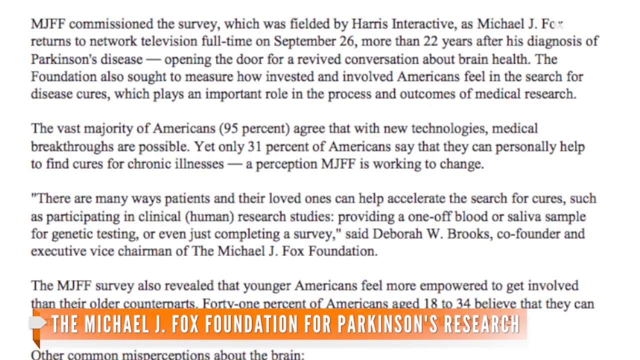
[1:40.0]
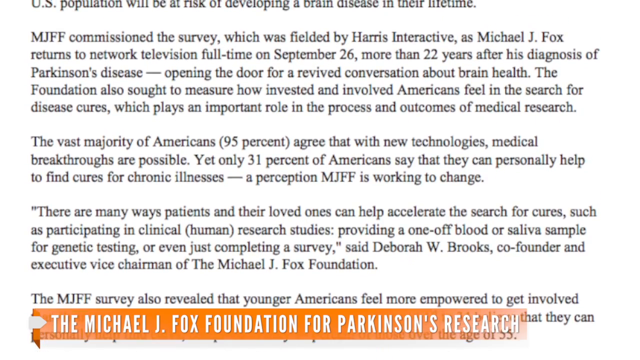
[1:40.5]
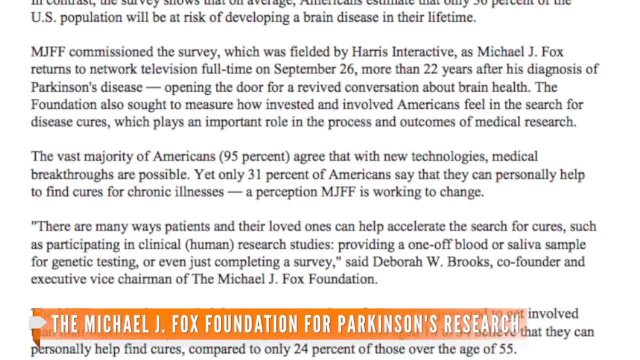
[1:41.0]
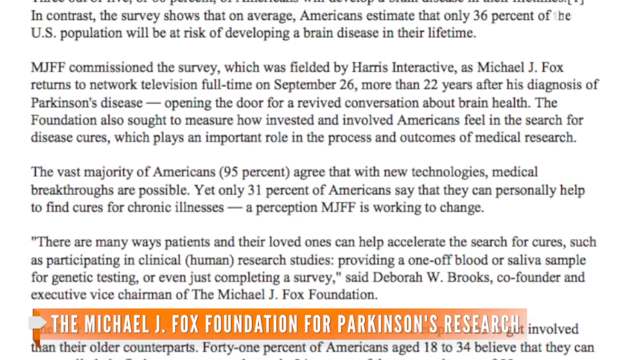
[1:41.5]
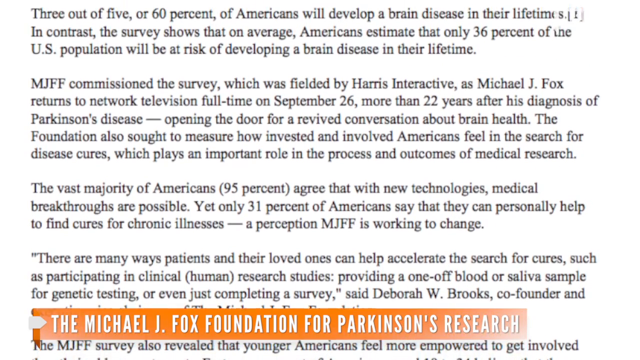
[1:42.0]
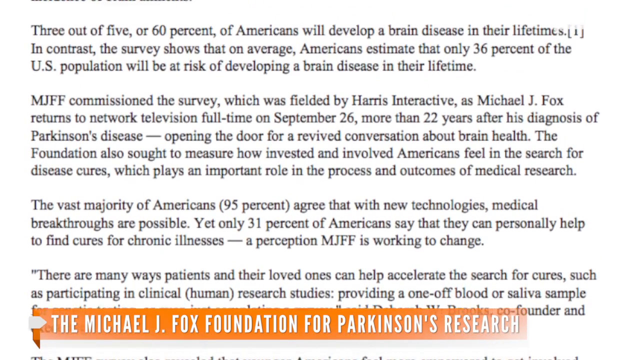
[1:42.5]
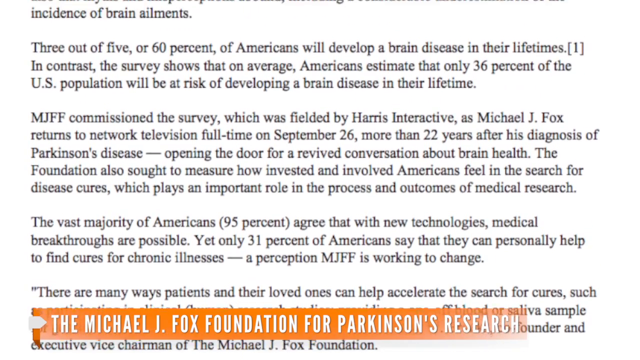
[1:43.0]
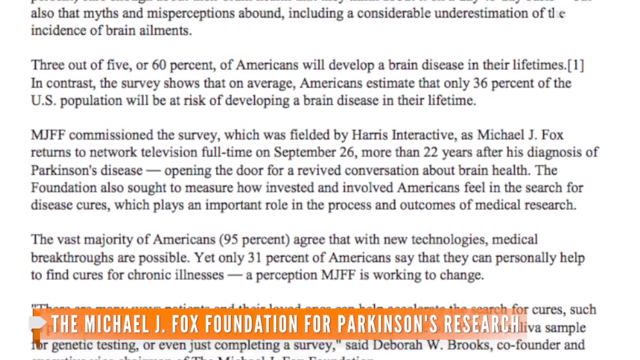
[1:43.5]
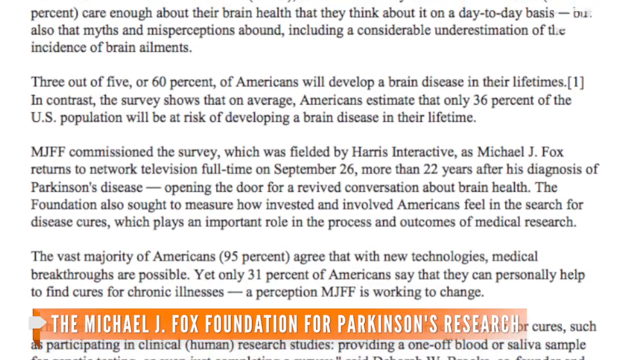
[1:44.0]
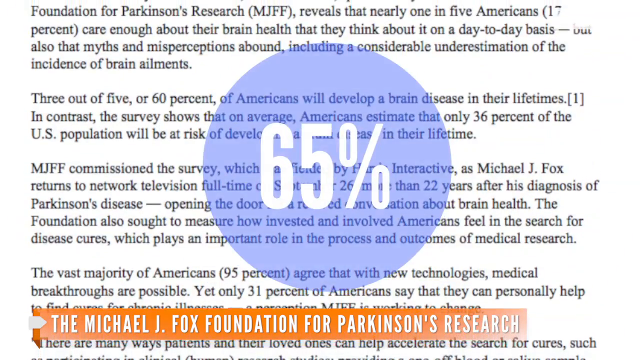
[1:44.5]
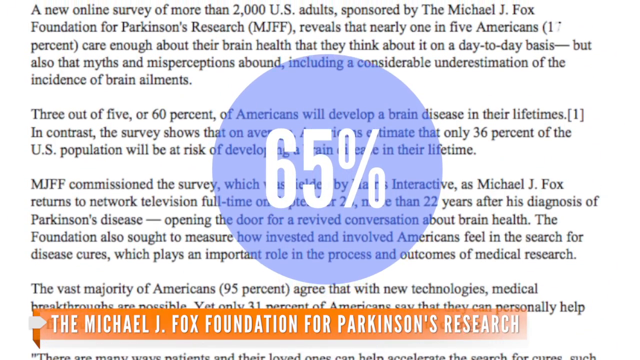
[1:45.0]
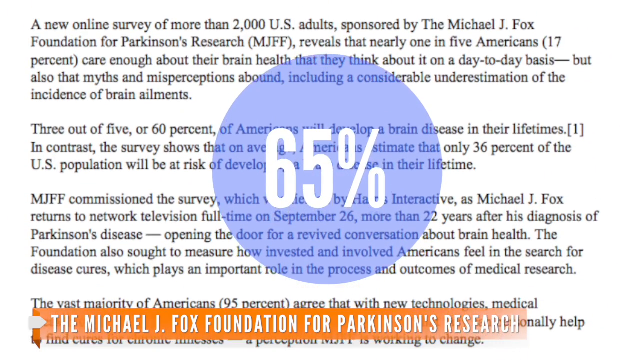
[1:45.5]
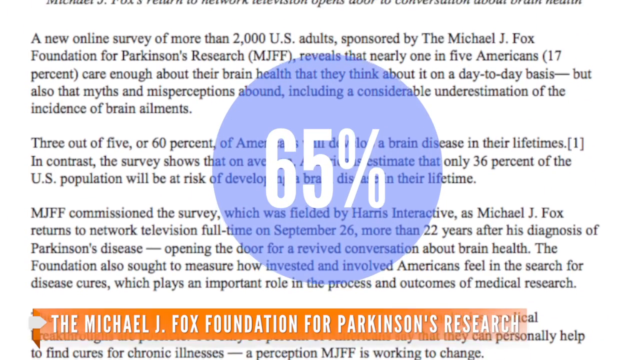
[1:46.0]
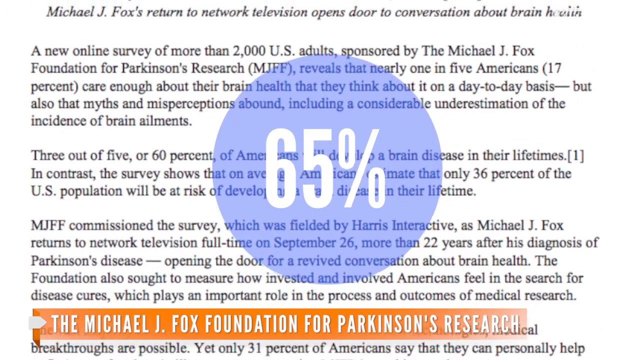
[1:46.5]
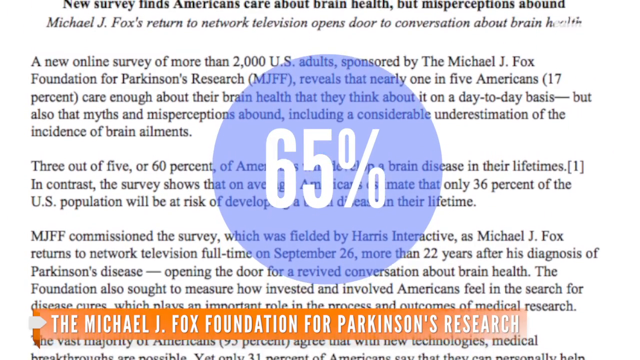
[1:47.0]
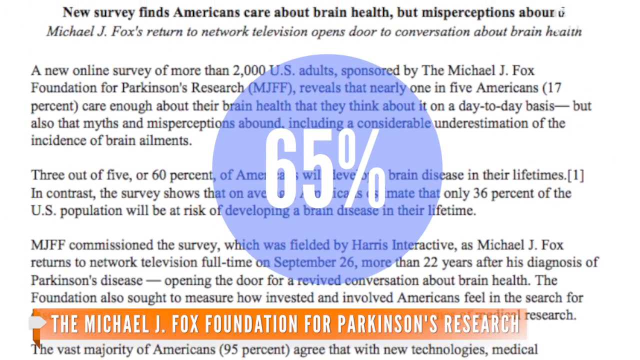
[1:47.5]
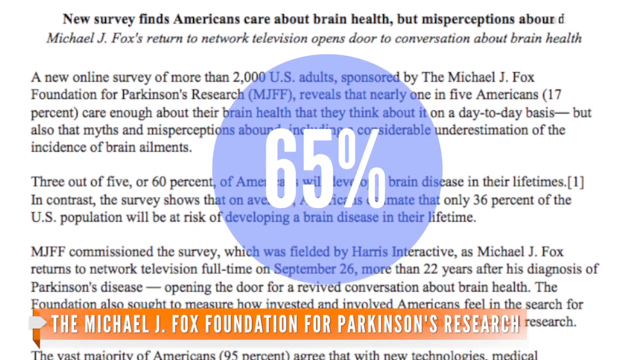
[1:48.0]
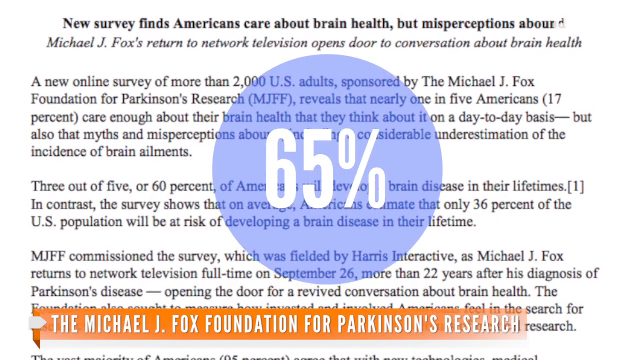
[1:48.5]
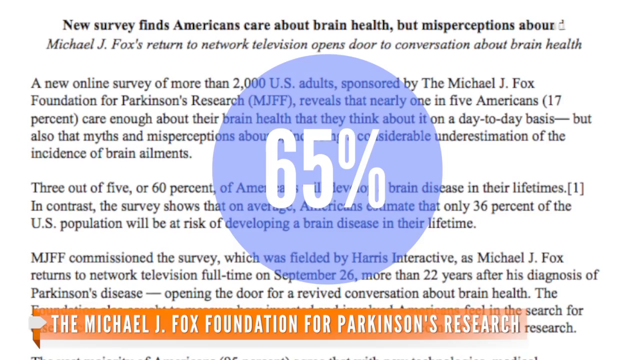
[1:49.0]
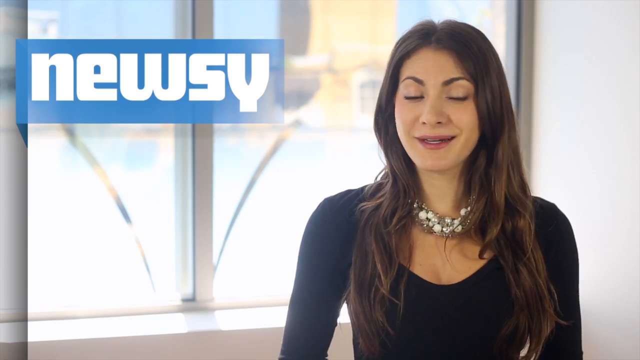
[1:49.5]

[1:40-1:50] A white background shows information from an article in black text reading "Muff Commission Survey, which was fielded by Harris Interactive as Michael J. Fox returns to network television full-time on September 26th, more than 22 years after his diagnosis of Parkinson's disease, opening the door for a revived conversation about brain health."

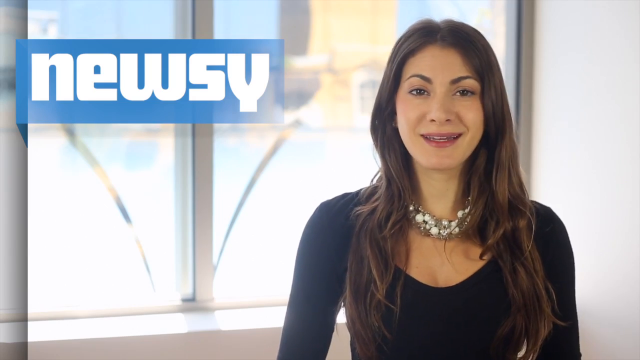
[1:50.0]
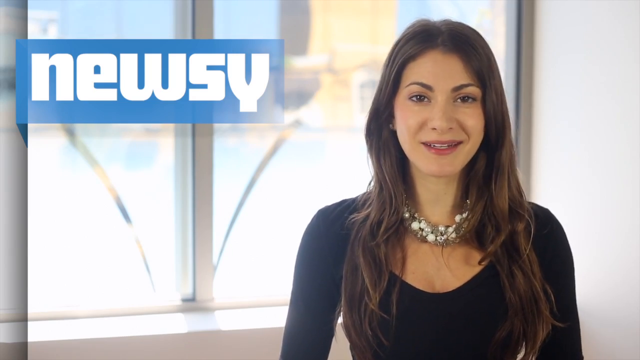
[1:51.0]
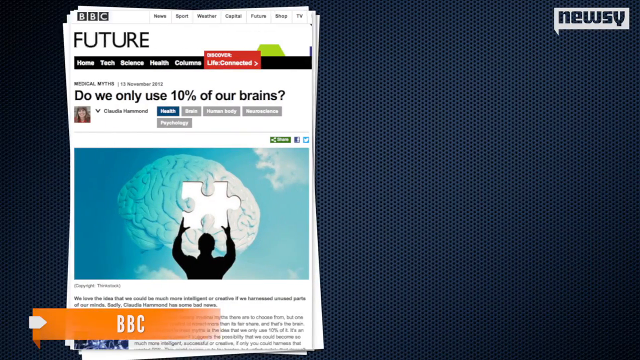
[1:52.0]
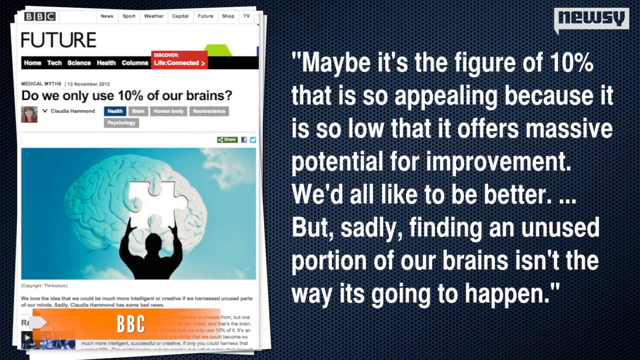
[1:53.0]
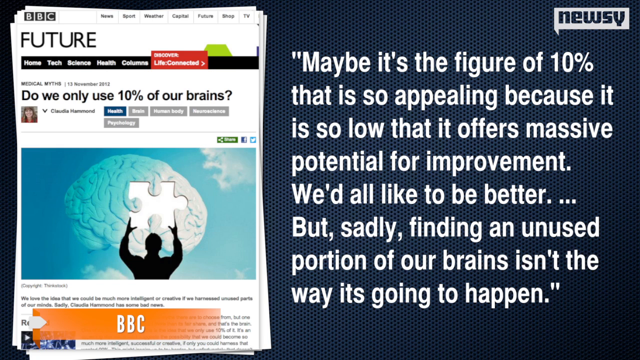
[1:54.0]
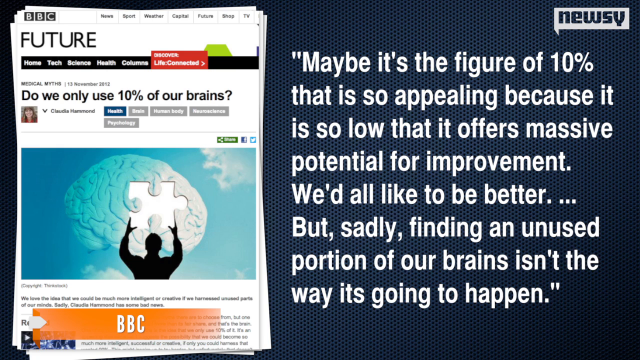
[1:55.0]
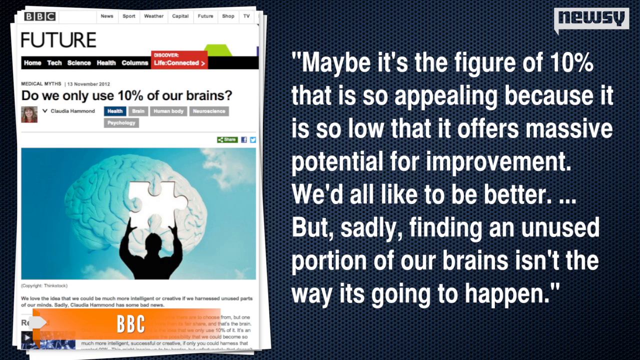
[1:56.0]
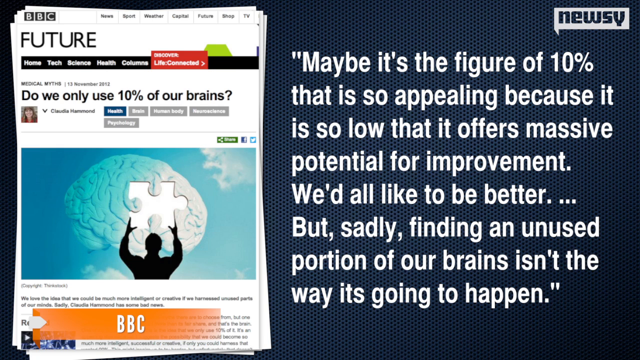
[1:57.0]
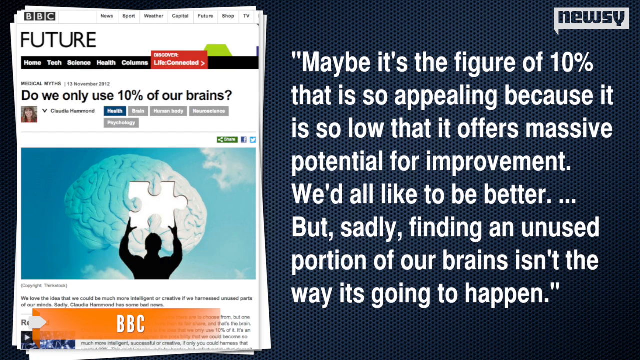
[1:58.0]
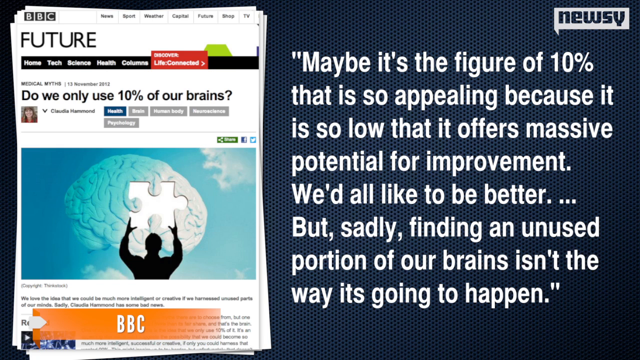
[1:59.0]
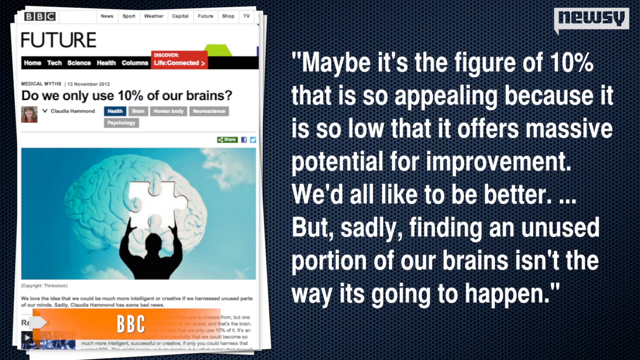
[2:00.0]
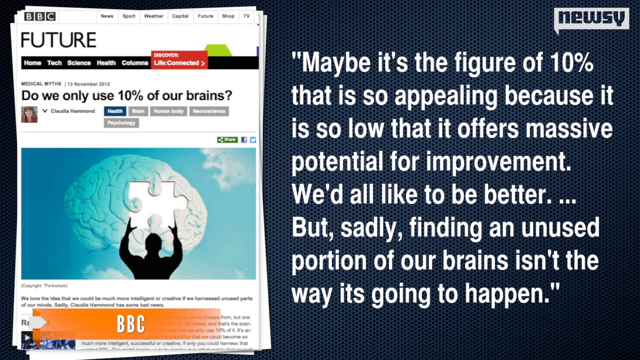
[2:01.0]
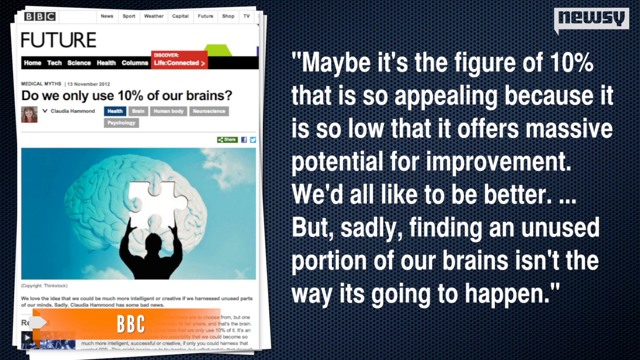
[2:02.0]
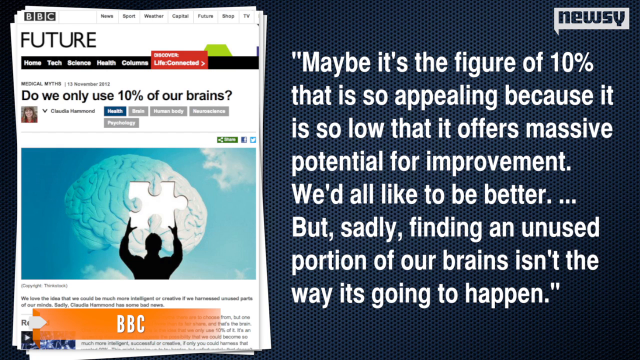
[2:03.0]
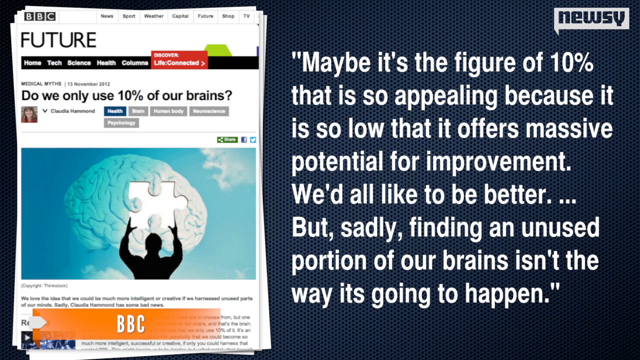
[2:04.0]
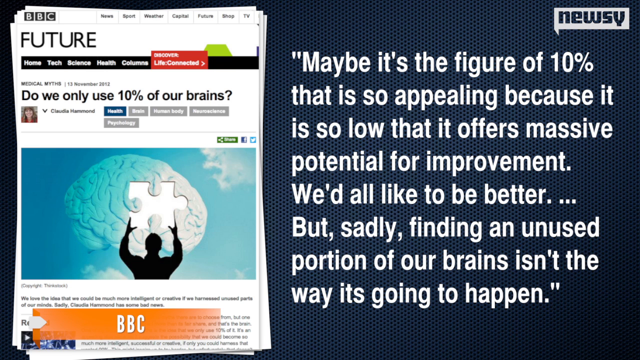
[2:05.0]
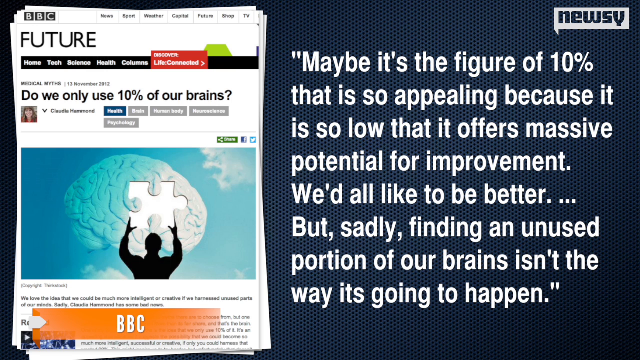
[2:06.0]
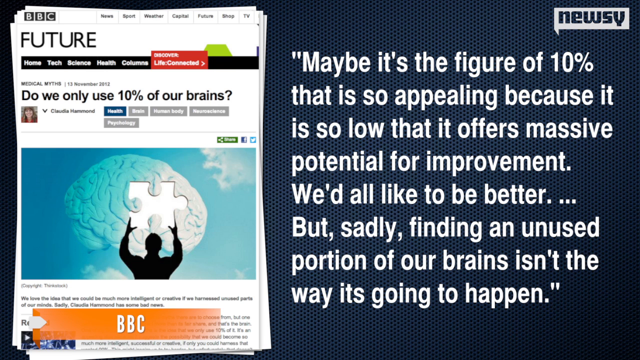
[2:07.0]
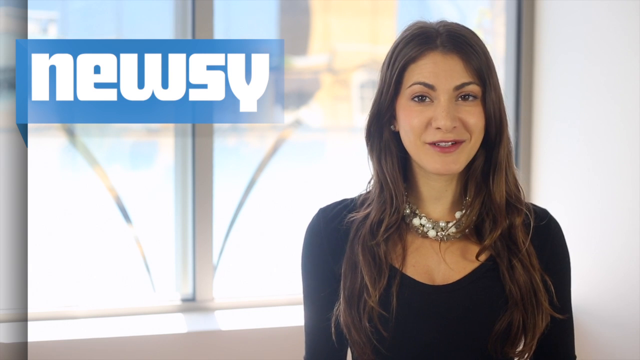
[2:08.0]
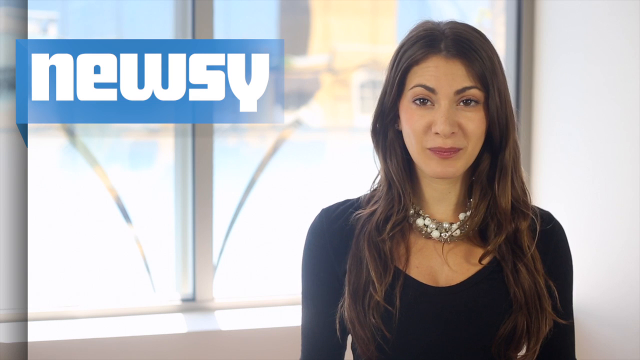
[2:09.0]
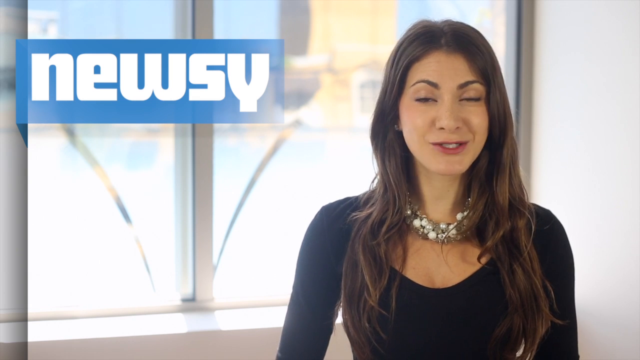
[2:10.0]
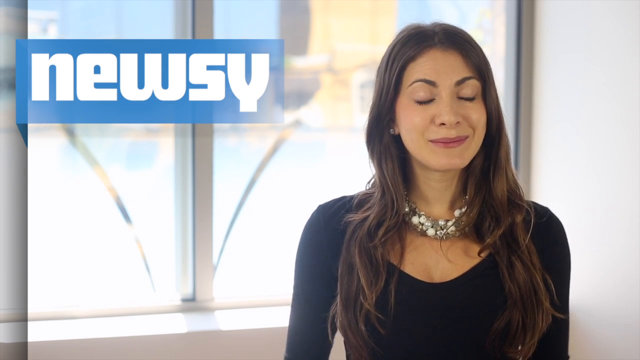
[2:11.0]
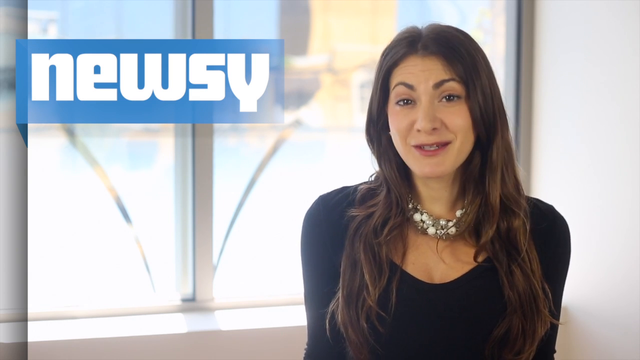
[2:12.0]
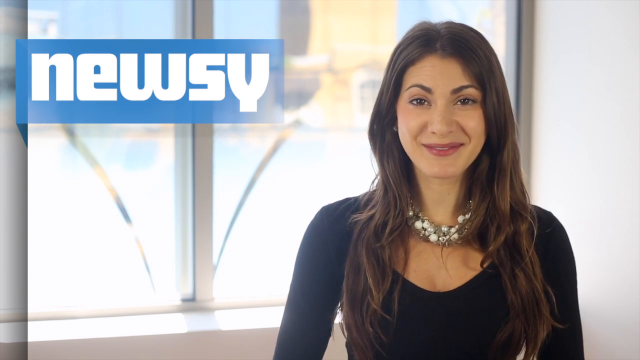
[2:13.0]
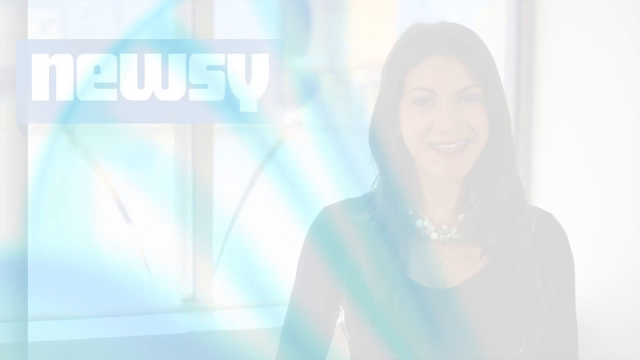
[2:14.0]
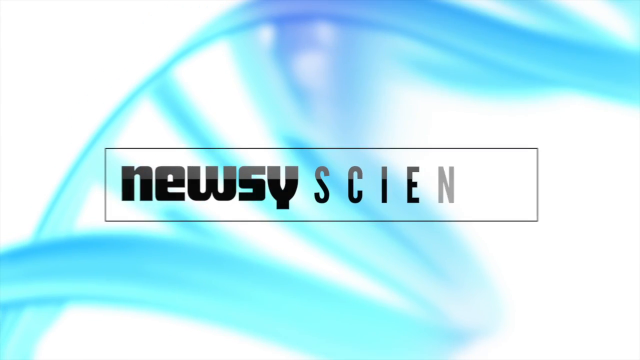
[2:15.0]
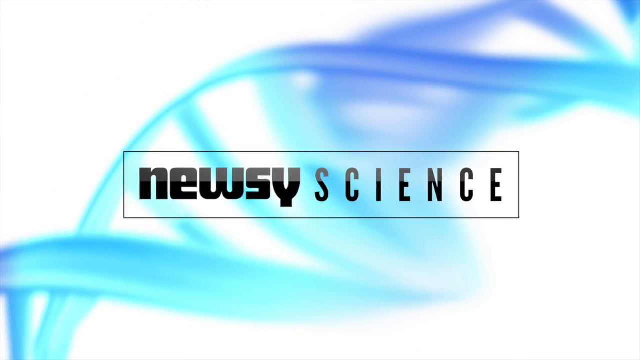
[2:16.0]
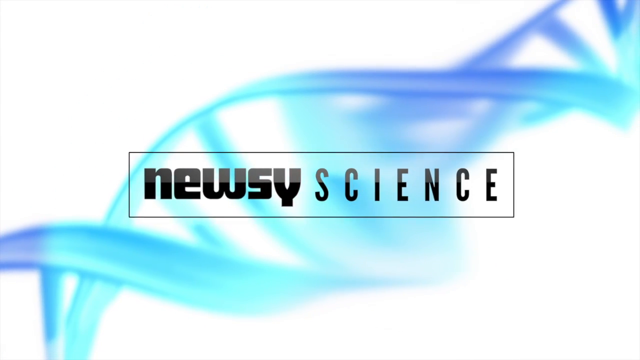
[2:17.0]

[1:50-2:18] The Newsy channel appears, with the word "Newsy" in bold white text as a logo in the upper left corner against a blue background. A young woman, perhaps in her late 20s or early 30s, with dark straight hair and brown eyes, talks to the camera, smiling and nodding her head. Suddenly an image of an article from the publication BBC Future appears, reading in white text on the right: "maybe it's the figure of 10 percent that is so appealing because it is so low that it offers a massive potential for improvement. We'd all like to be better but sadly finding an unused portion of our brains isn't the way it's going to happen." As the video continues, the woman appears again, smiling and nodding her head up and down as she speaks. The video closes with the words "Newsy science" in black text.